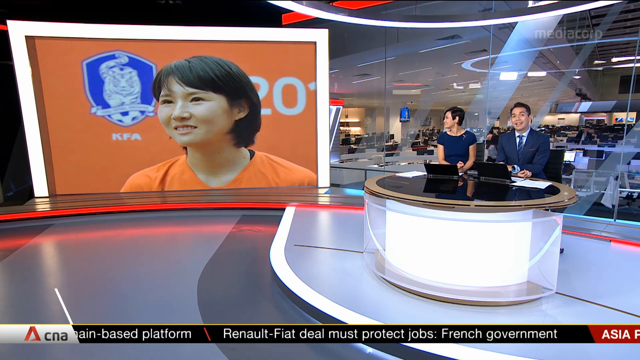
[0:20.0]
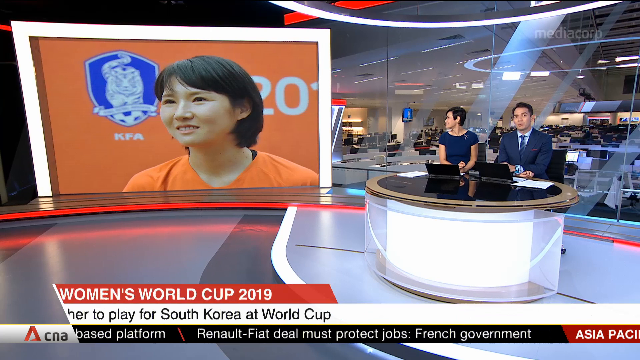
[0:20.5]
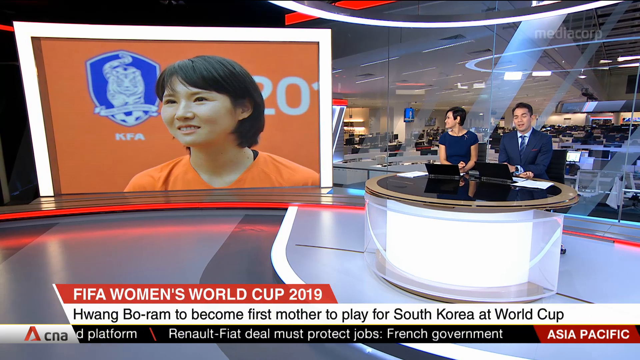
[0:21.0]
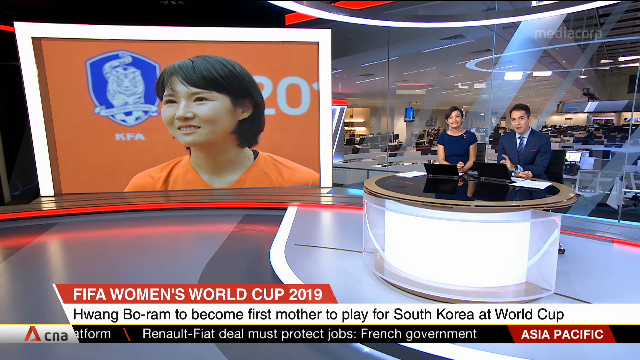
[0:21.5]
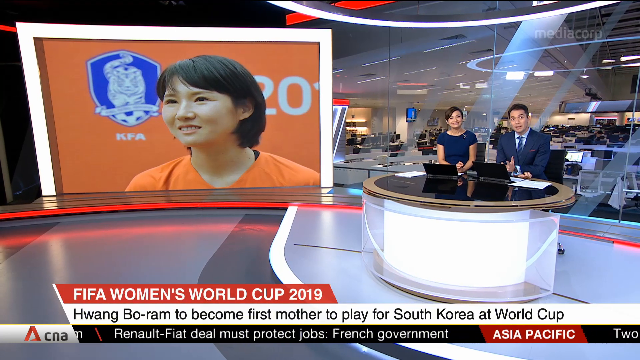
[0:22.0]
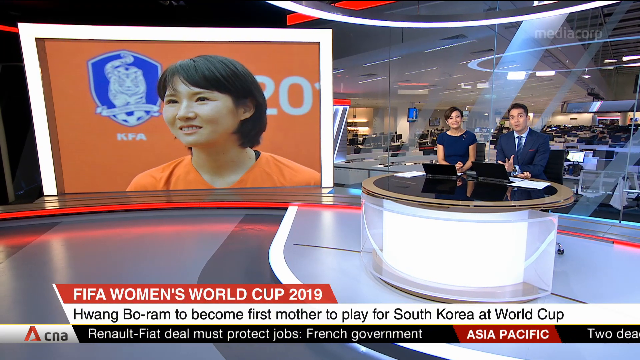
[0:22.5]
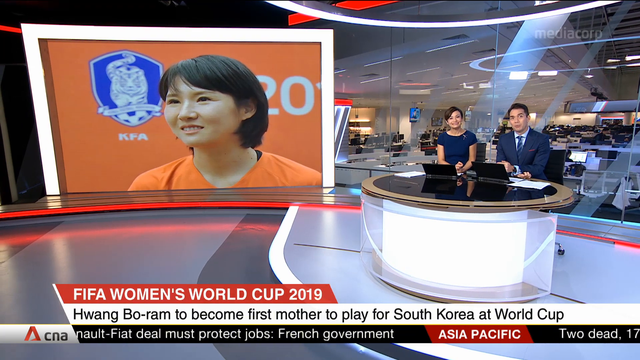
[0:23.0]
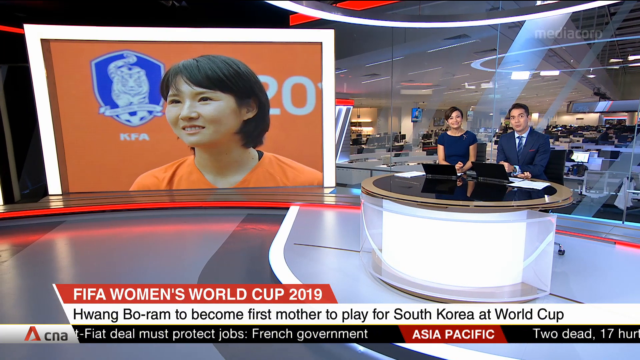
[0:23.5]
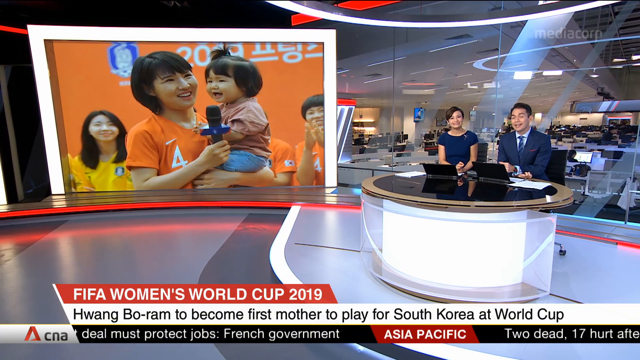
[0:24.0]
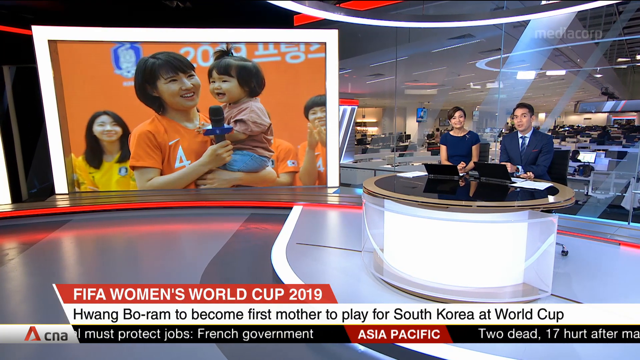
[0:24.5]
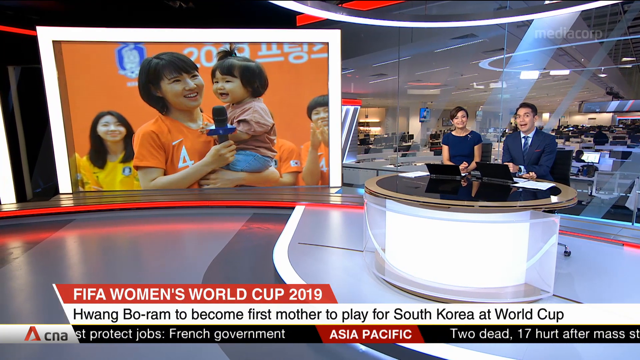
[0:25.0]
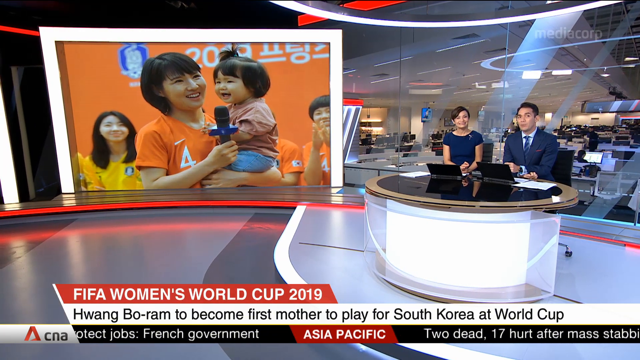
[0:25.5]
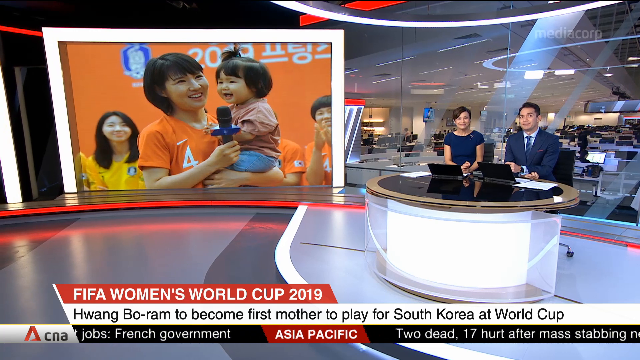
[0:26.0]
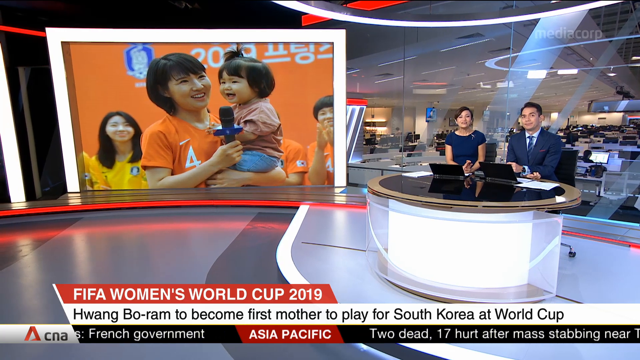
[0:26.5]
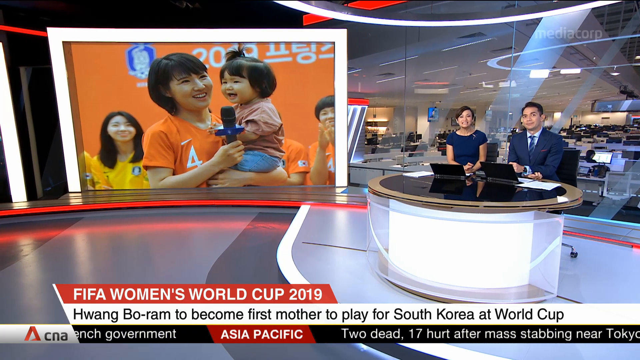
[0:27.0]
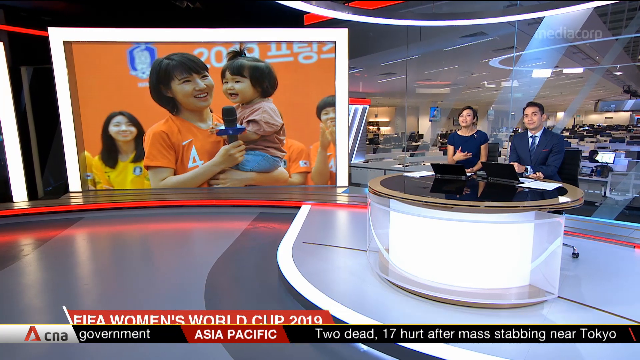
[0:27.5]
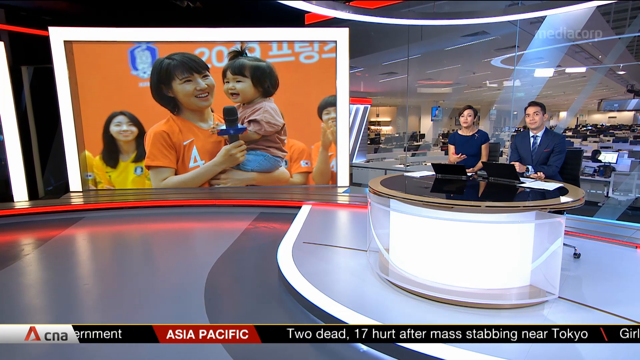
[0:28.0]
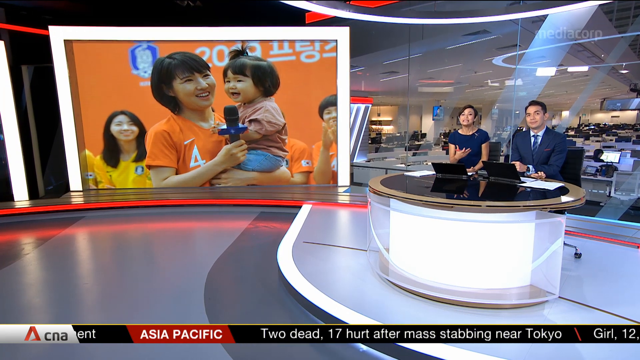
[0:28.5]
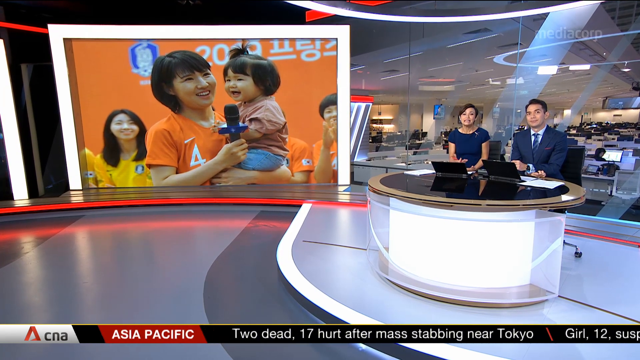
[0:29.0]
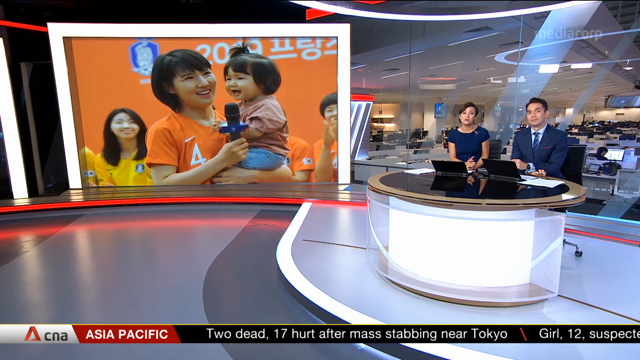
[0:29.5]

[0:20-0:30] A news presentation room holds two people: a woman with short hair in a blue dress, and a man in a blue suit. In front of them is a news desk, where each has a laptop, and there are also some papers on top of the desk. Far in the background, a pool of news editors is visible, each with a computer screen in front of them. On the left side is a screen where the news presentations appear. On it is a young guy in an orange t-shirt who seems to be smiling. The topic of the news is FIFA Women's World Cup 2019. Several women are displayed on the main screen, holding a microphone and seemingly talking. A KPA logo, designed mainly with a tiger, also appears on the screen.